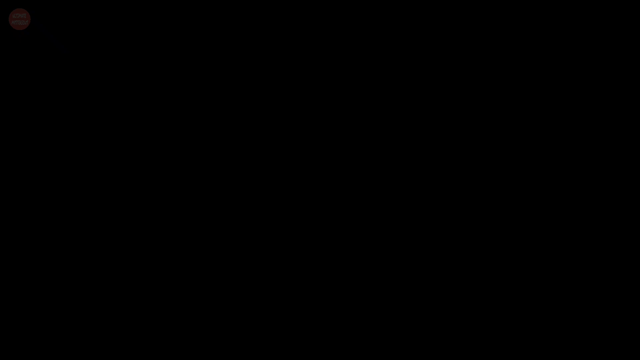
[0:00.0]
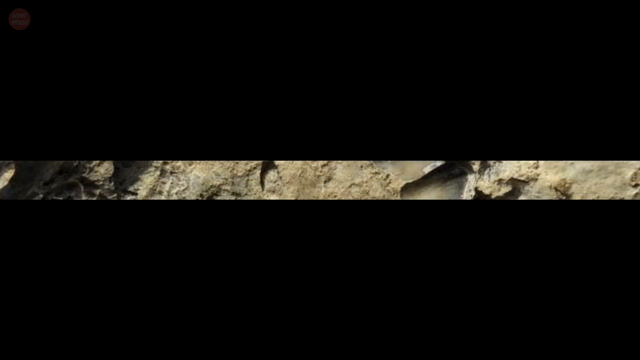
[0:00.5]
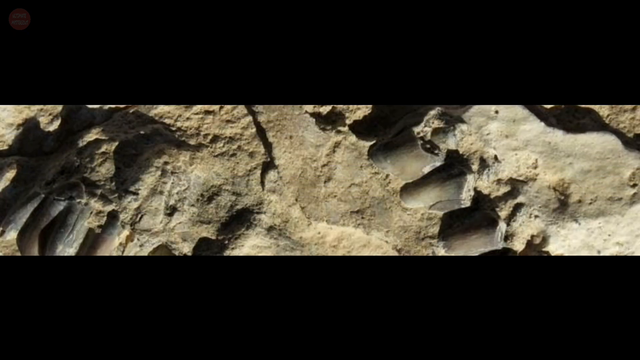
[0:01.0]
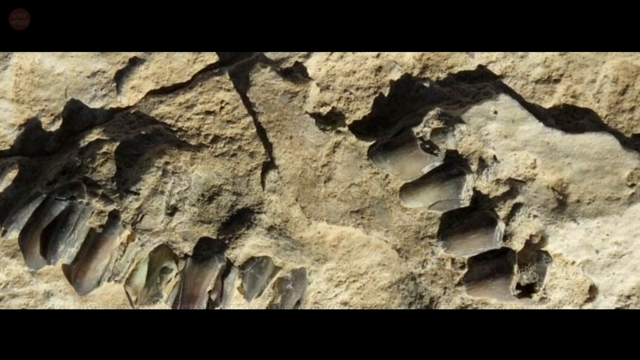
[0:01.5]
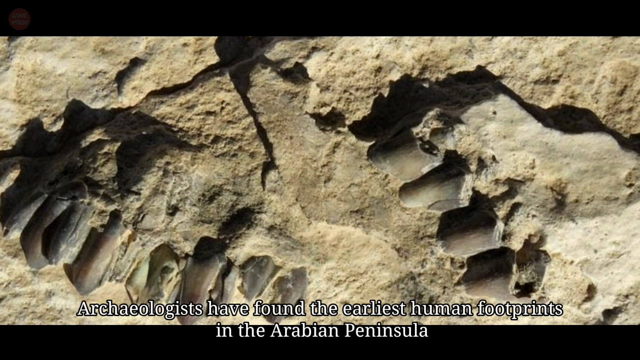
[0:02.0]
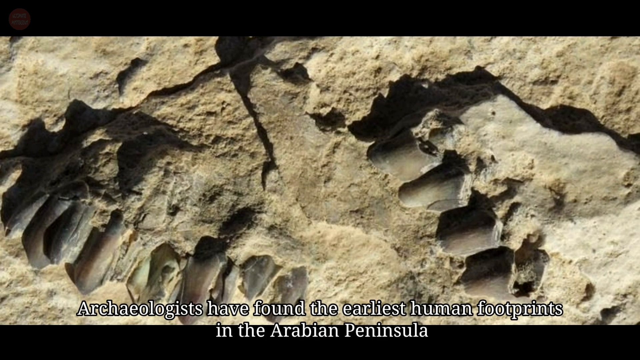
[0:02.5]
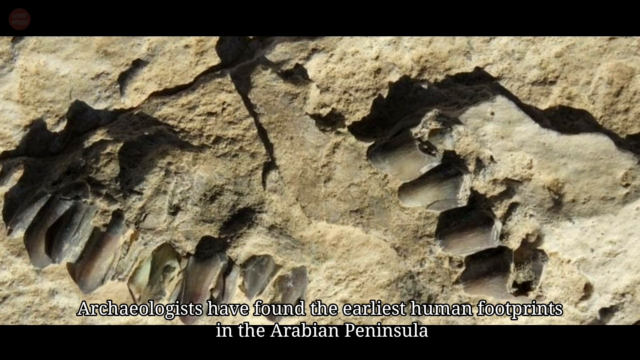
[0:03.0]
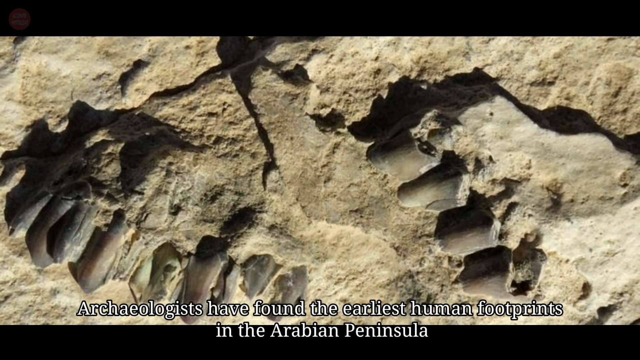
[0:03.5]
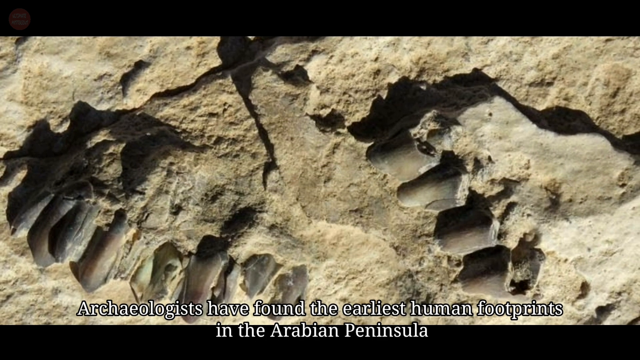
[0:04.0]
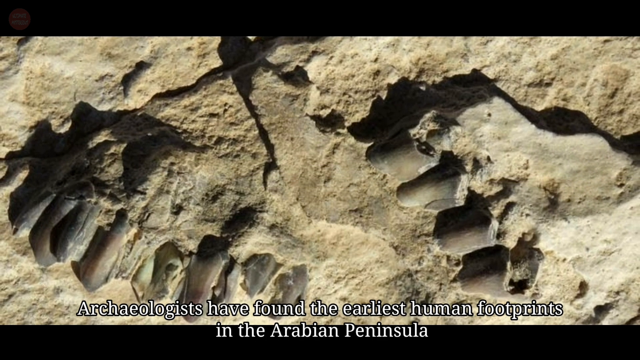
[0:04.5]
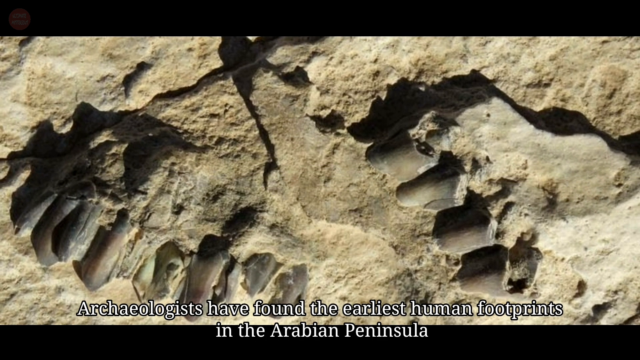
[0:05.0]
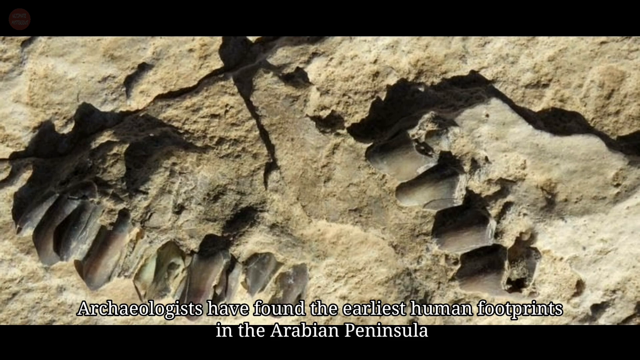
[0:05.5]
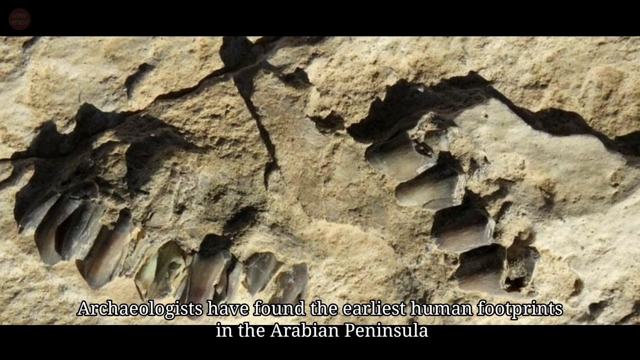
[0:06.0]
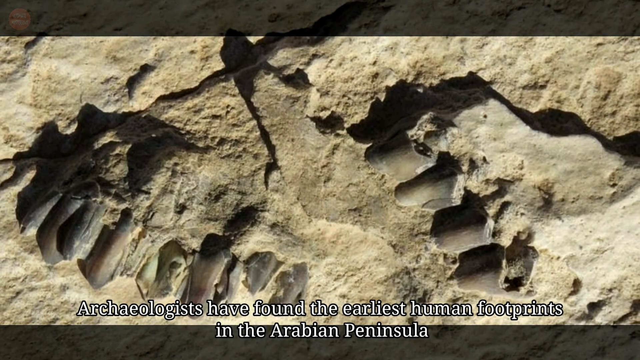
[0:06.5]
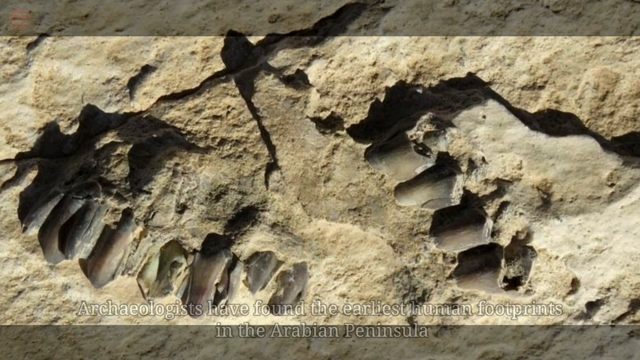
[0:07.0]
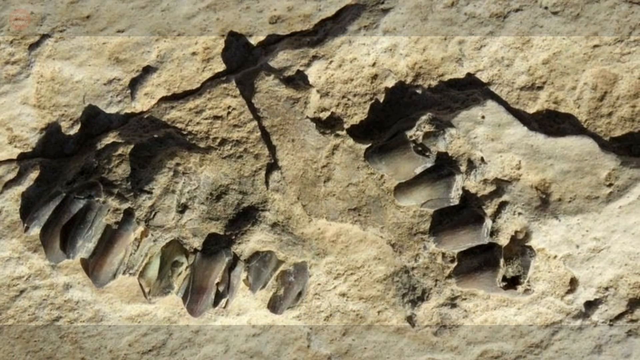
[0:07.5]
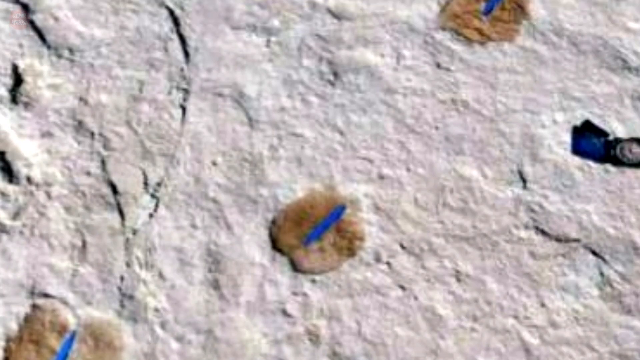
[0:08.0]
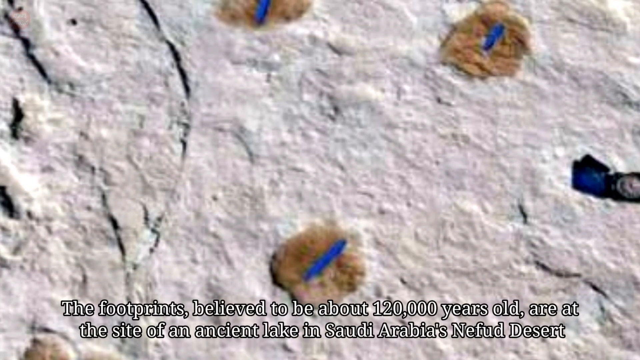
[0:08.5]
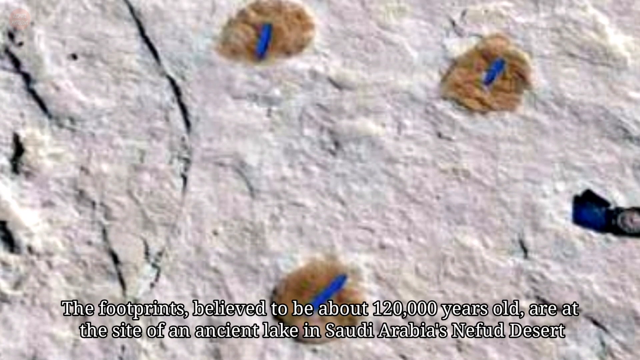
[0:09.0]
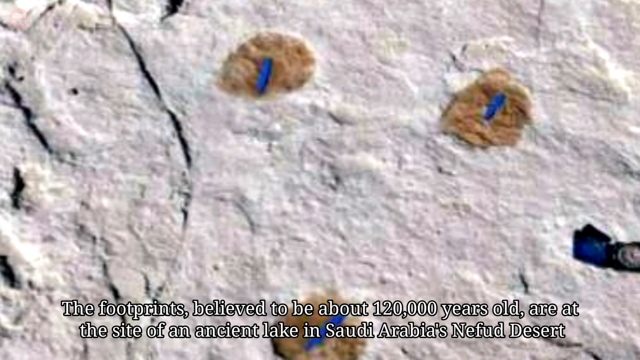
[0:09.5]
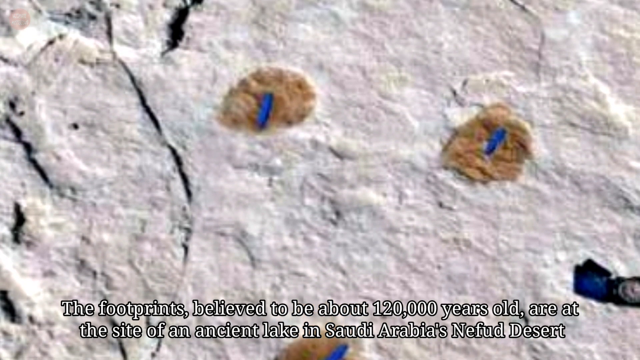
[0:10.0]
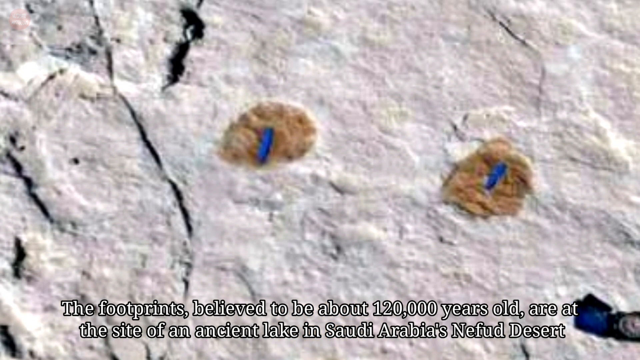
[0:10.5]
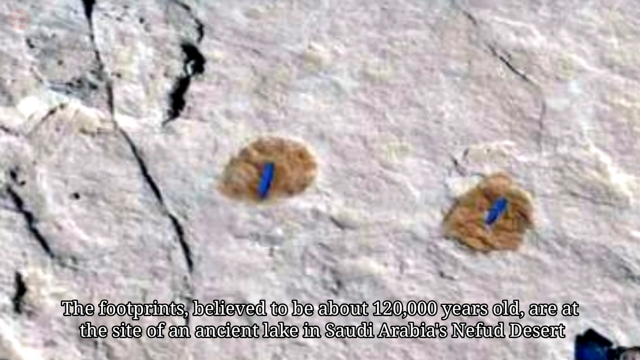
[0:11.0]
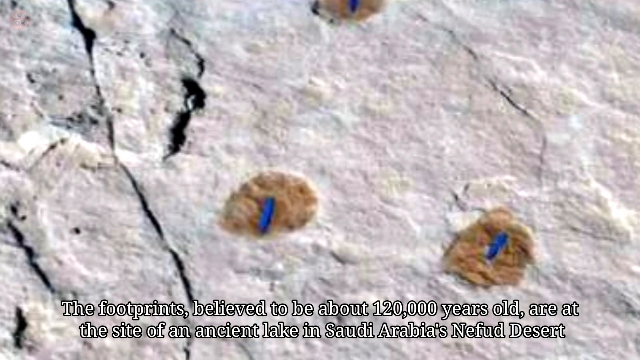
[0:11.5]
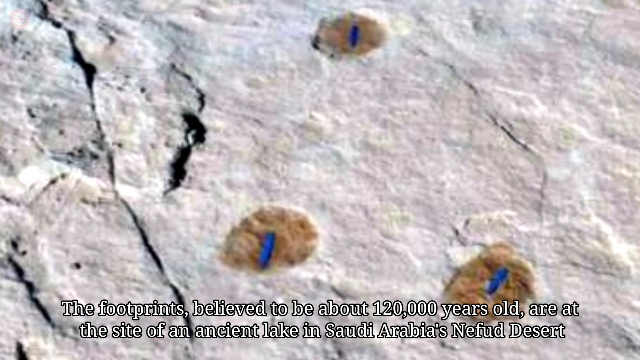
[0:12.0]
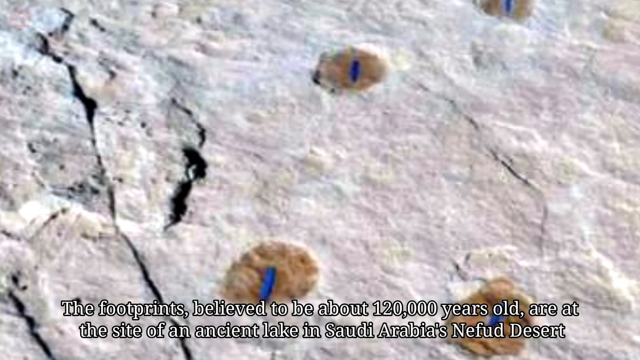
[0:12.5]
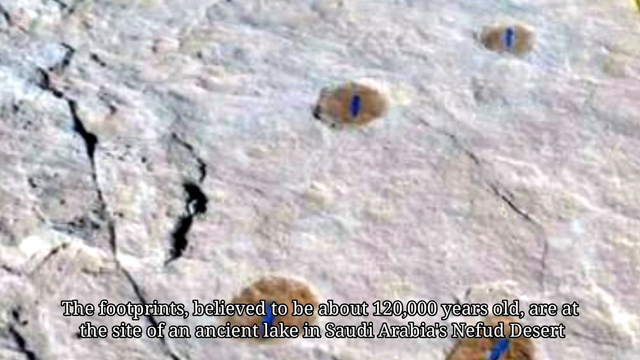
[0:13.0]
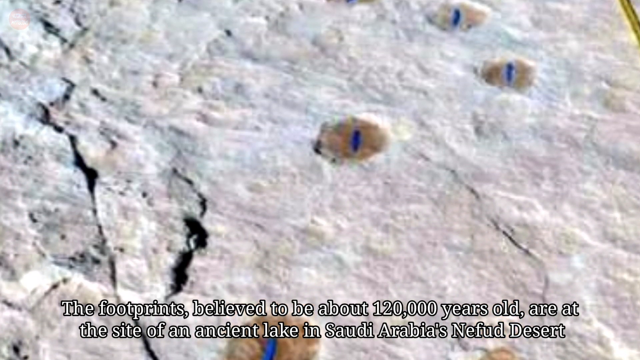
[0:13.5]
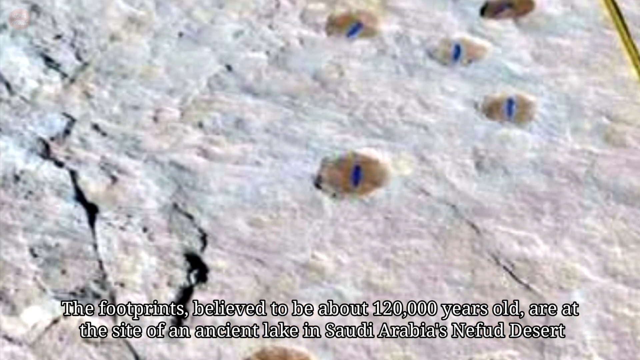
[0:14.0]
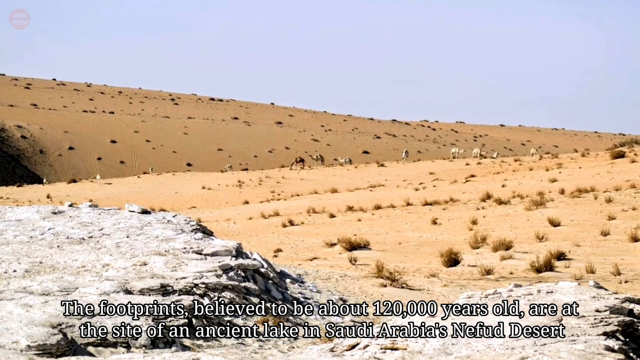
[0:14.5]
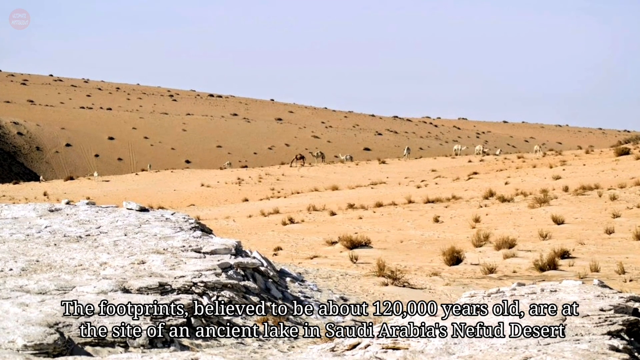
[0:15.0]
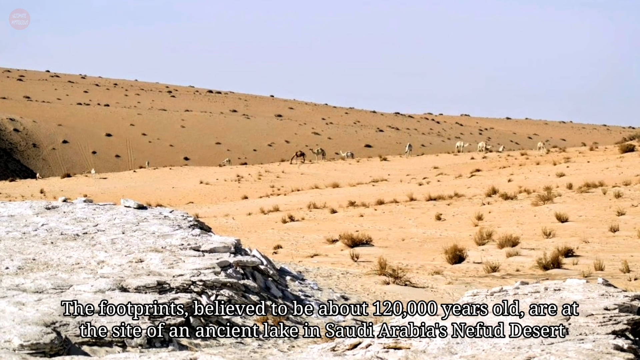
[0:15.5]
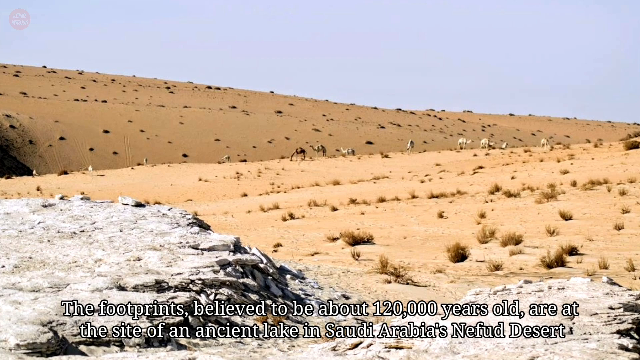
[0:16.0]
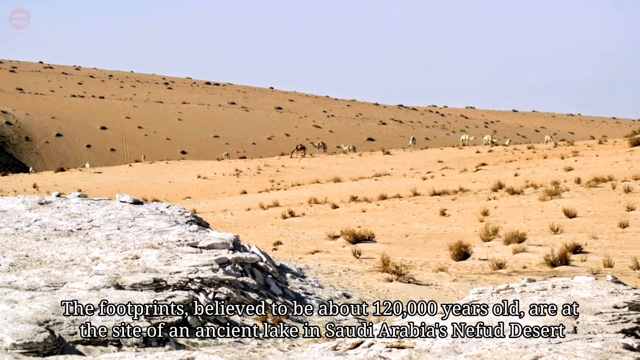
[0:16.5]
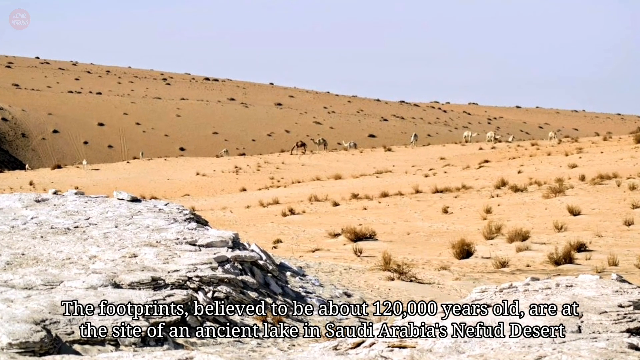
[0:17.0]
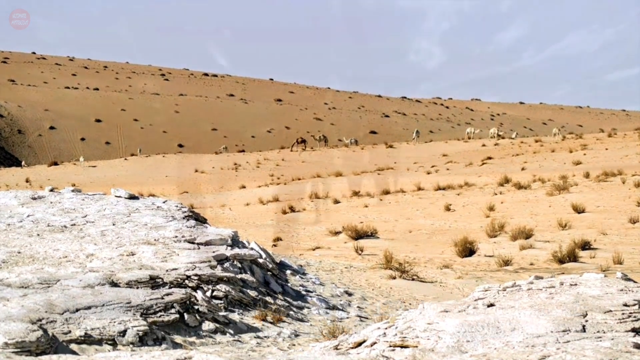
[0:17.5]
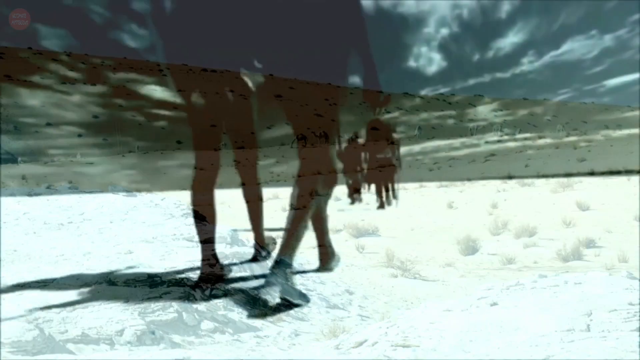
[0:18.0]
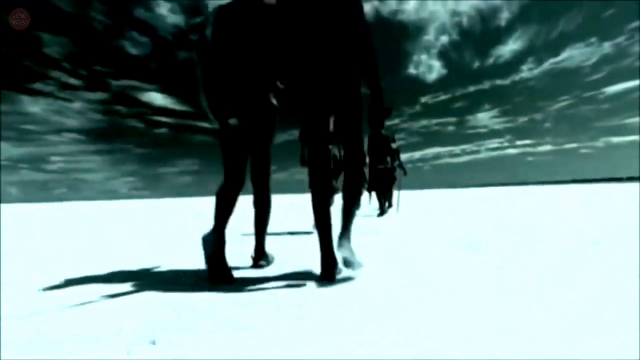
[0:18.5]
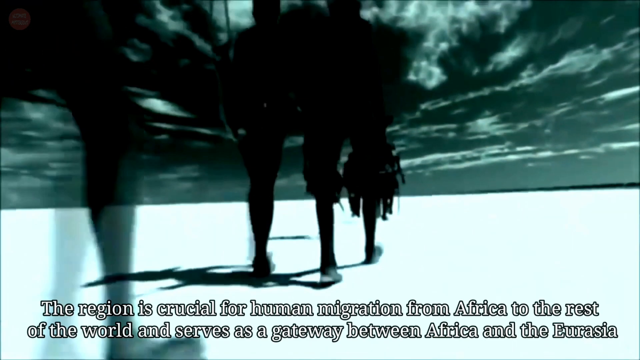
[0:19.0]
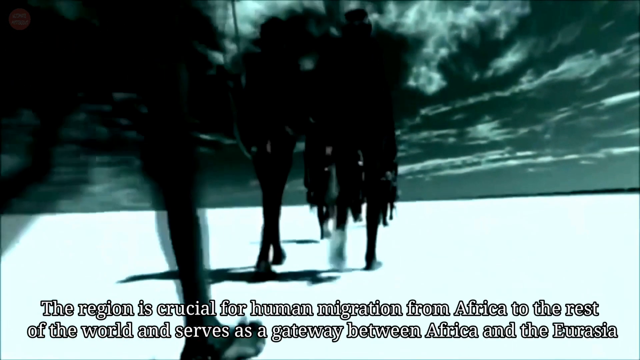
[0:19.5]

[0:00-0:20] On-screen text says "archaeologists have found the earliest human footprints in the Arabian Peninsula," and some very strange footprints appear. Text states that the footprints are believed to be about 12,000 years old and are at the site of an ancient lake in Saudi Arabia's Nafud desert. The footprints look like pale dots on gray rock as the camera pans upward; small parts of the gray rock are marked in blue, but nothing there is identifiable as a normal human footprint. A desert with some camels follows. Then comes an oddly colored visualization of early humans walking, apparently imagining how it looked in the past. The people are barefoot and walk along flat ground that may be sandy or rocky. The sky is an odd shade of blue, and the people are unnaturally dark, almost silhouettes, so little of them can be seen. Text says the footprints came from the desert.